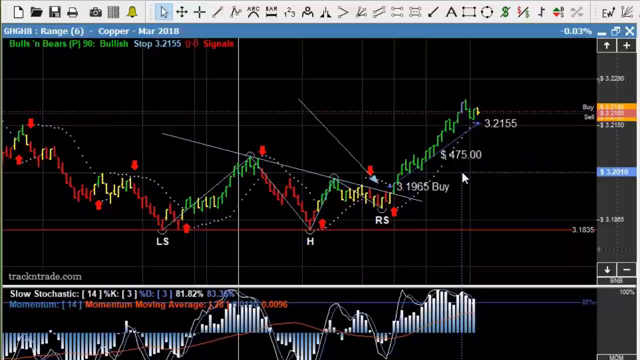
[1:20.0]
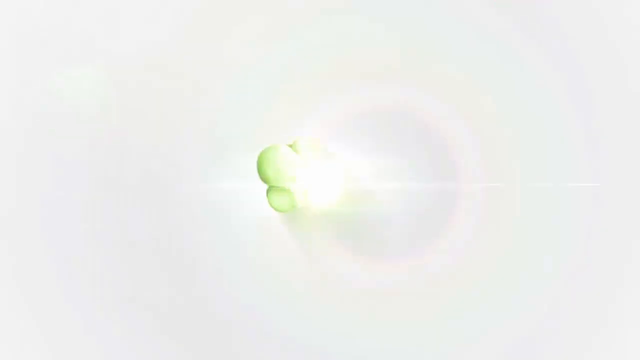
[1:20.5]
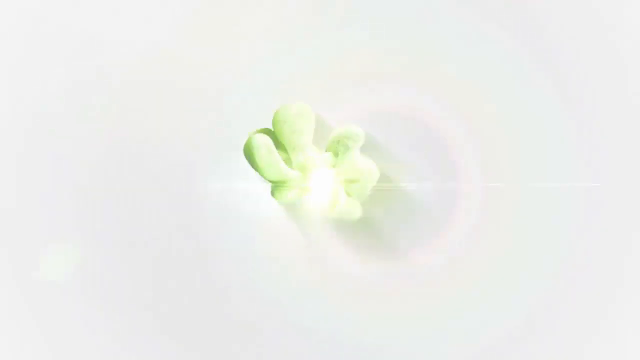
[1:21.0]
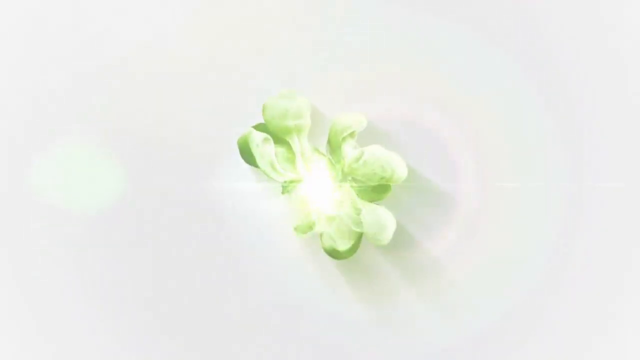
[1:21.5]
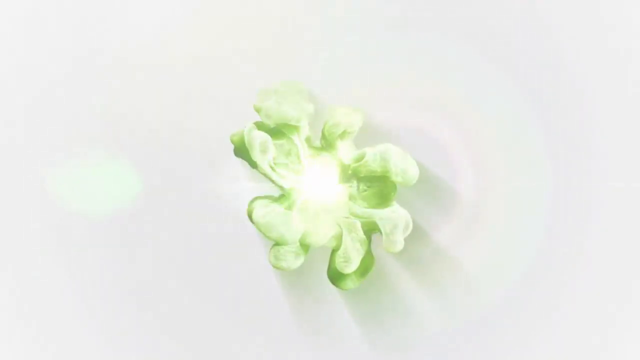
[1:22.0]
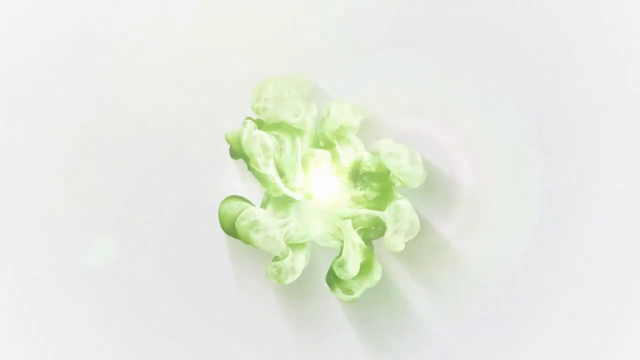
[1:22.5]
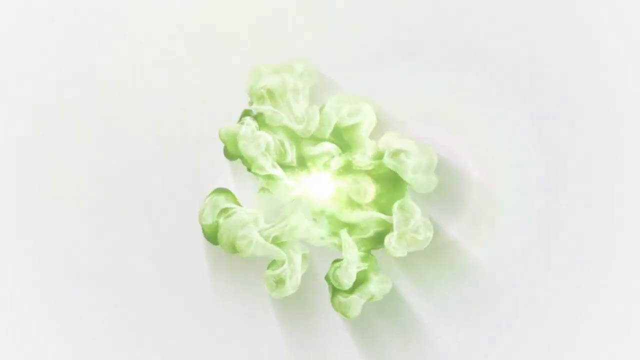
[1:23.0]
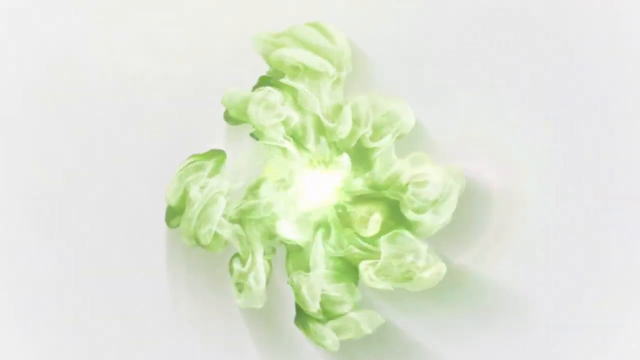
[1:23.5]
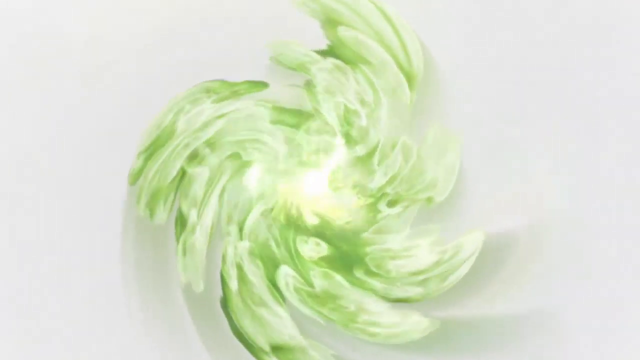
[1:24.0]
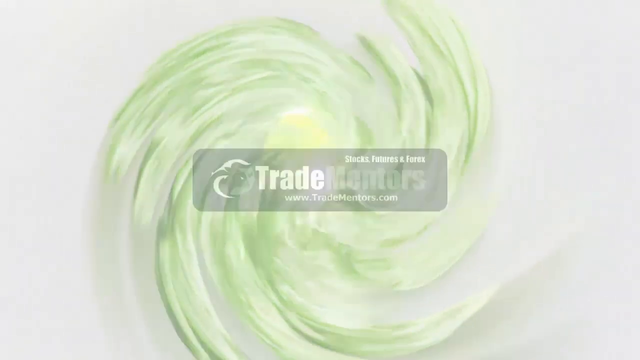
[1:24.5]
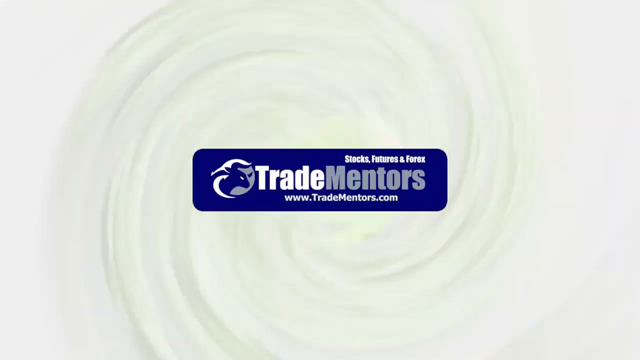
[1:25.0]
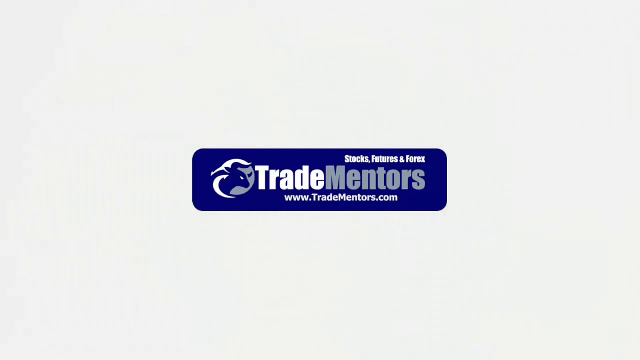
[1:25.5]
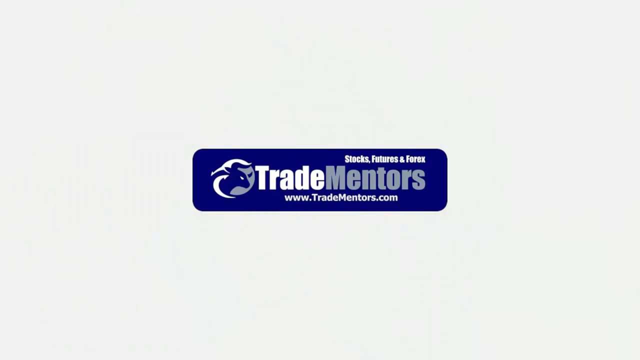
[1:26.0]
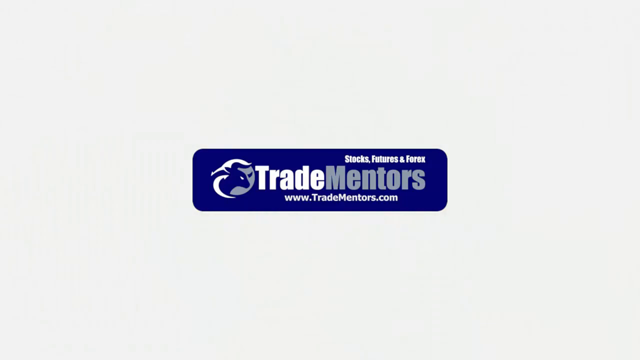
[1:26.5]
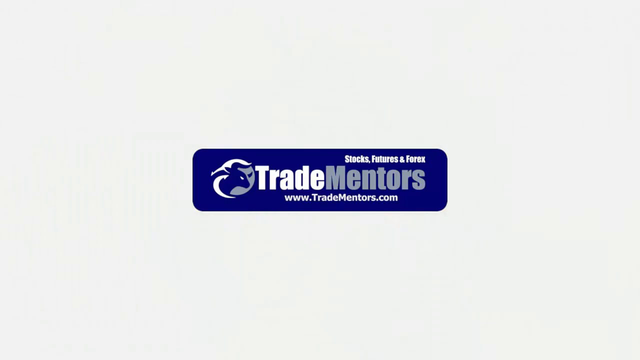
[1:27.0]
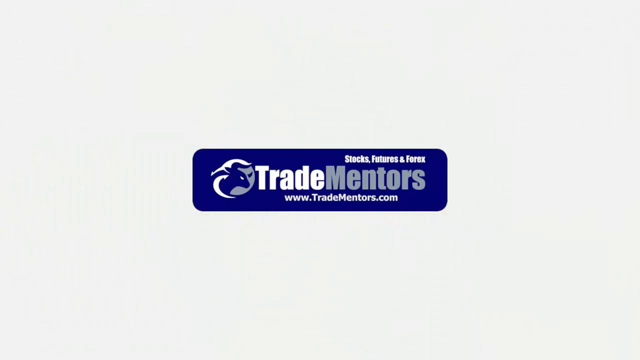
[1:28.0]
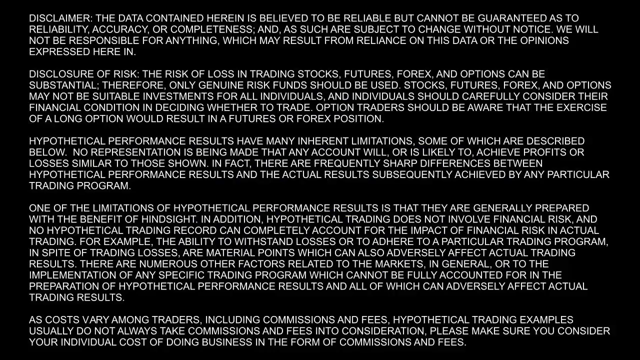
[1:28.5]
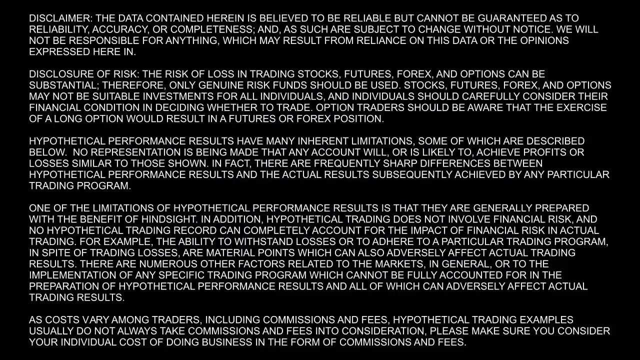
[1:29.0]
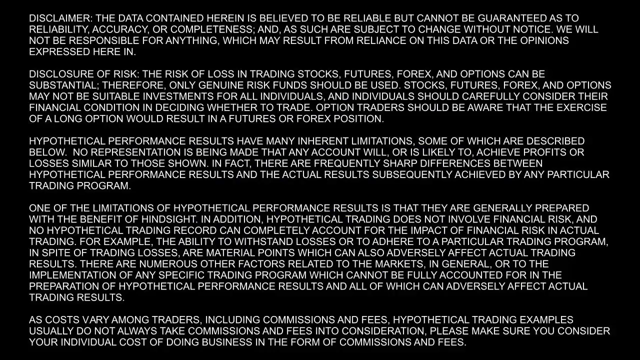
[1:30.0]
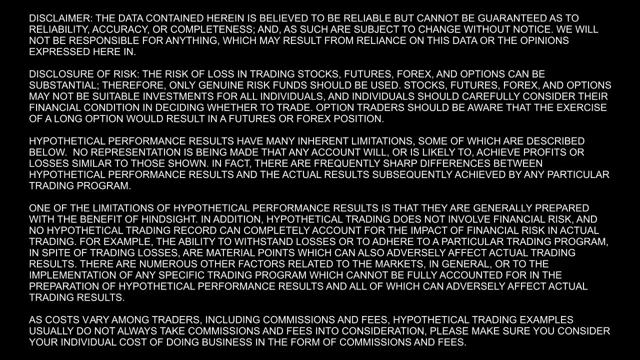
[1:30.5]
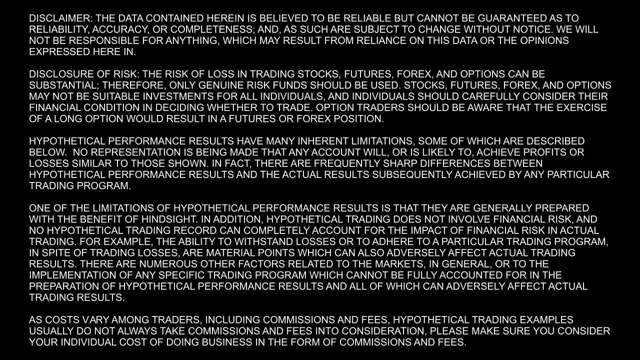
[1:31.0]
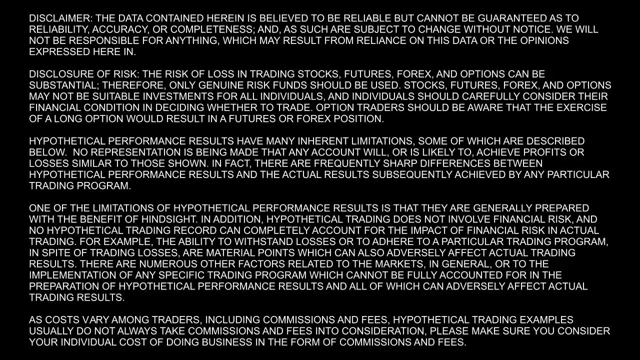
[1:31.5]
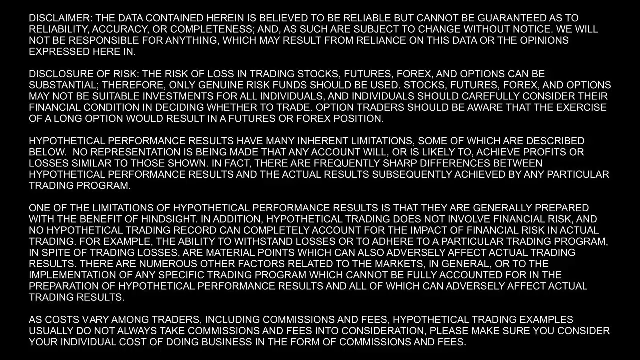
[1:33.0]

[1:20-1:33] The chart shows the added letters: starting at L S, going up to H, down to H, up to H, and down to R S, with some lines that have appeared. Numbers including 475 and 32155 are displayed. Much of the chart is going green, and it is green at the end. A bar graph below is hard to see. A line is labeled "buy" and "sell." The screen then turns white with green, reading "trade mentors stocks futures and Forex" and "www.tradementors.com." On the white screen the advertisement is partly in blue, and then a disclaimer appears.